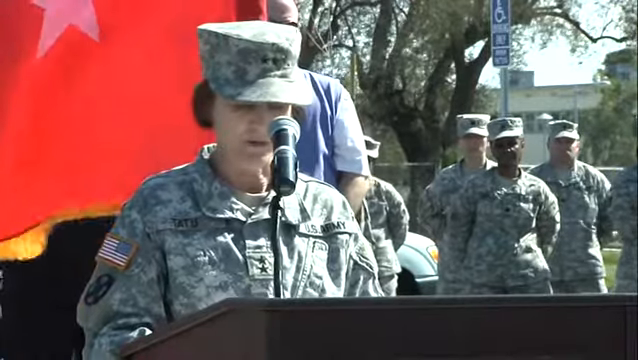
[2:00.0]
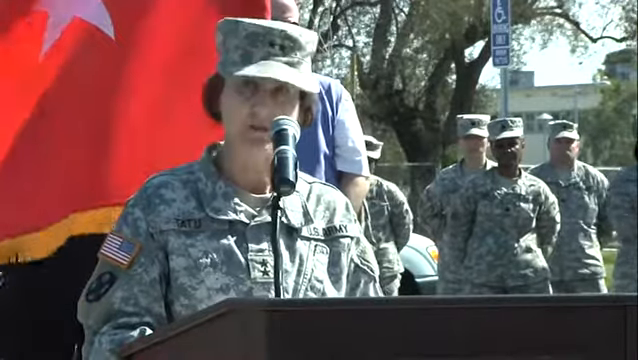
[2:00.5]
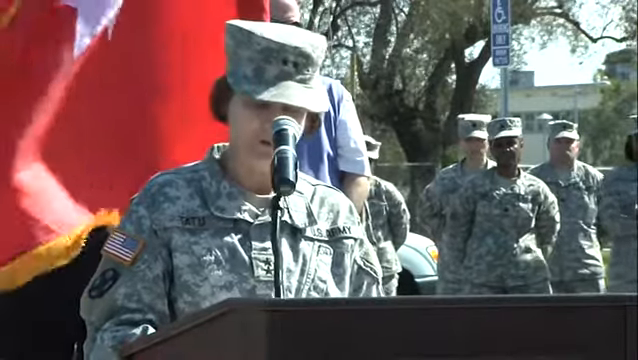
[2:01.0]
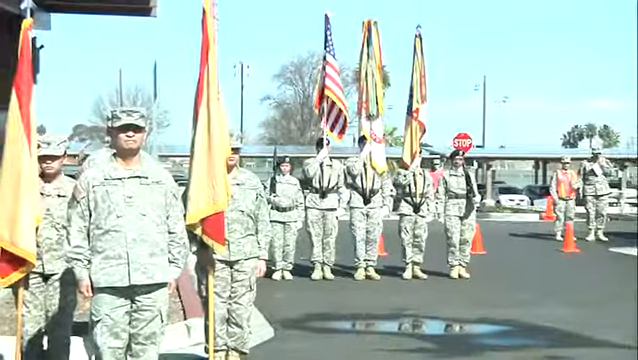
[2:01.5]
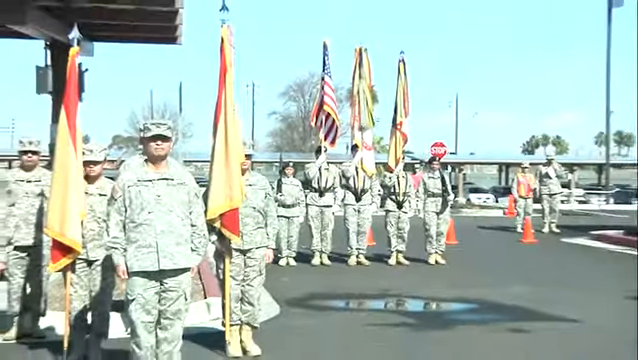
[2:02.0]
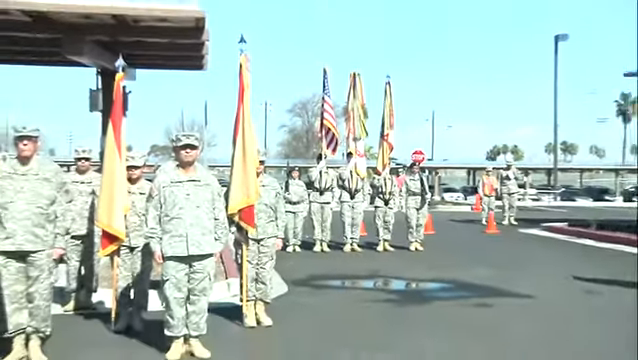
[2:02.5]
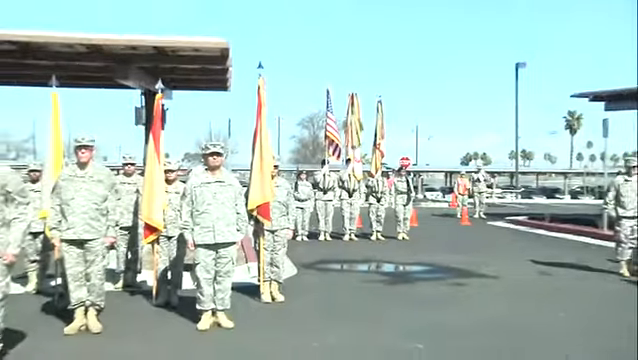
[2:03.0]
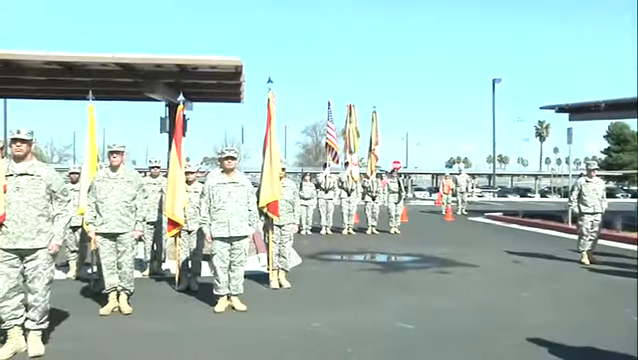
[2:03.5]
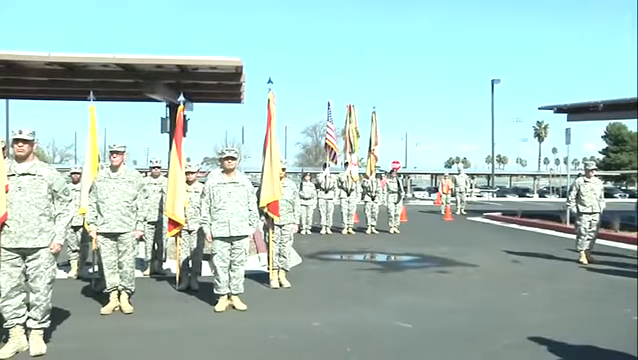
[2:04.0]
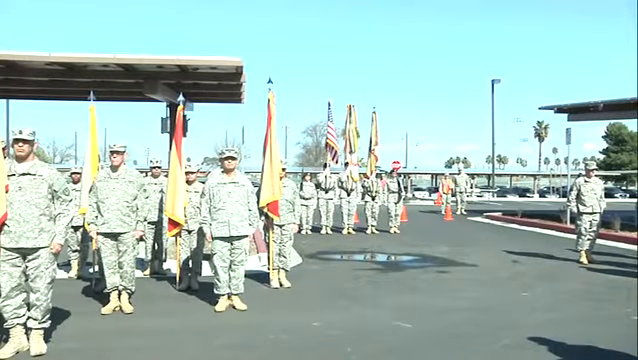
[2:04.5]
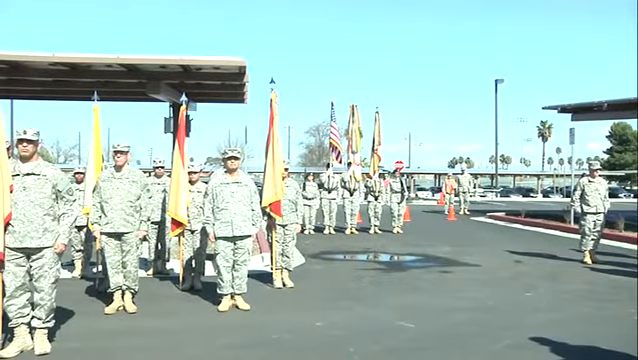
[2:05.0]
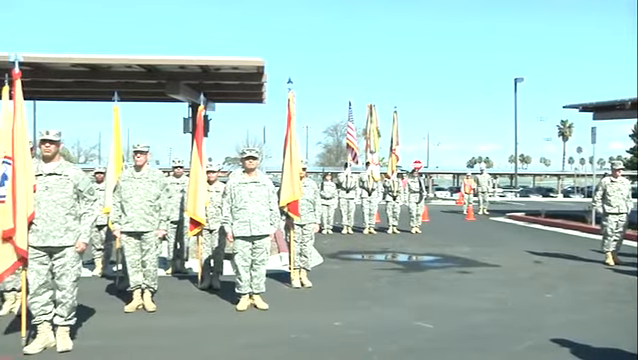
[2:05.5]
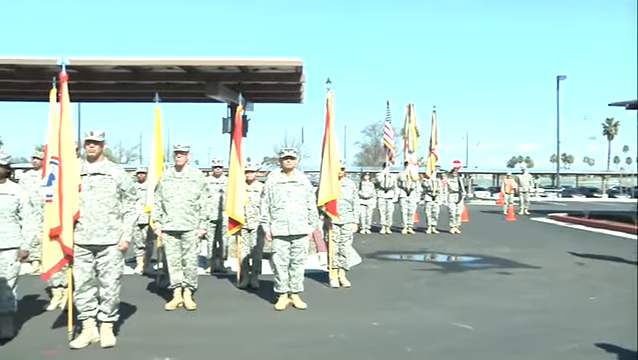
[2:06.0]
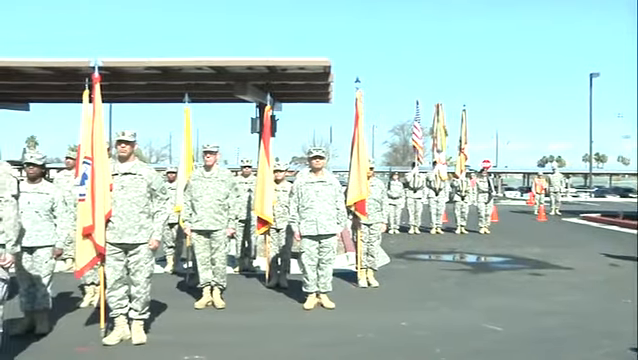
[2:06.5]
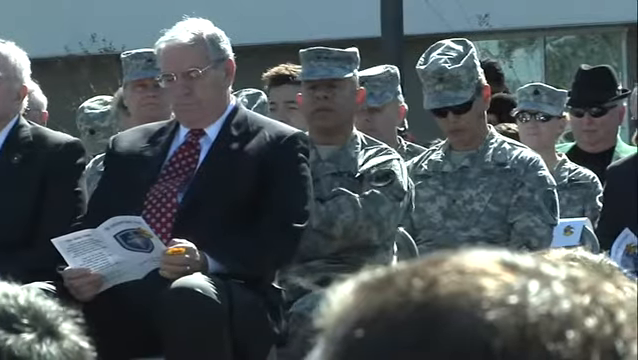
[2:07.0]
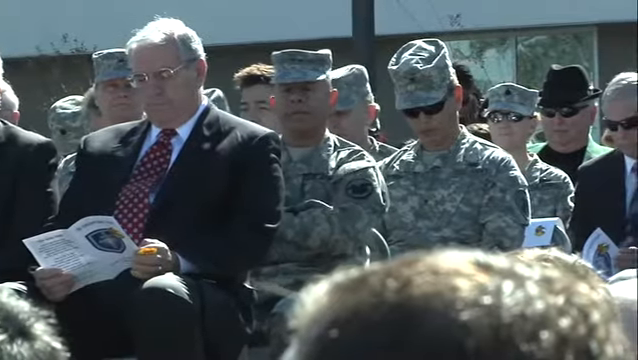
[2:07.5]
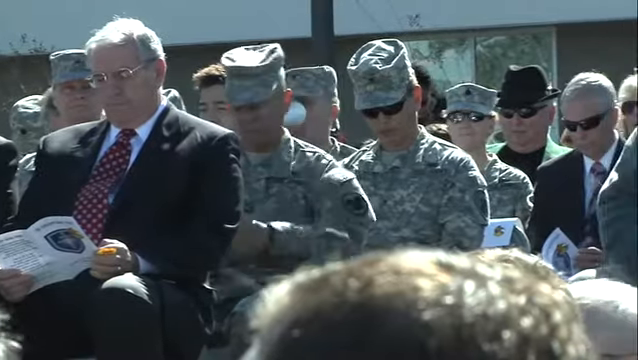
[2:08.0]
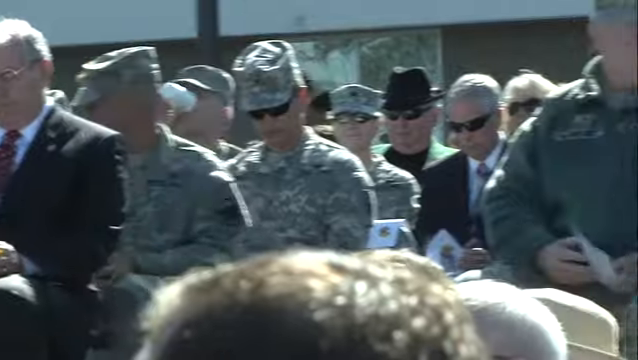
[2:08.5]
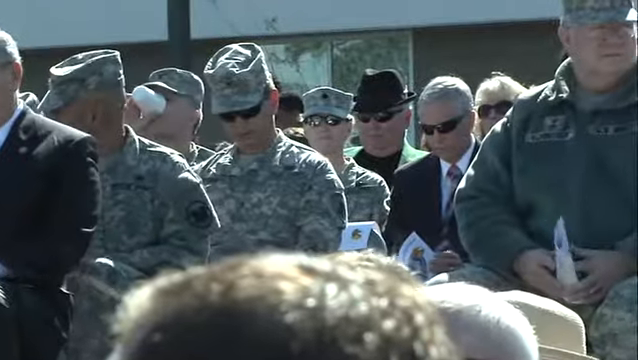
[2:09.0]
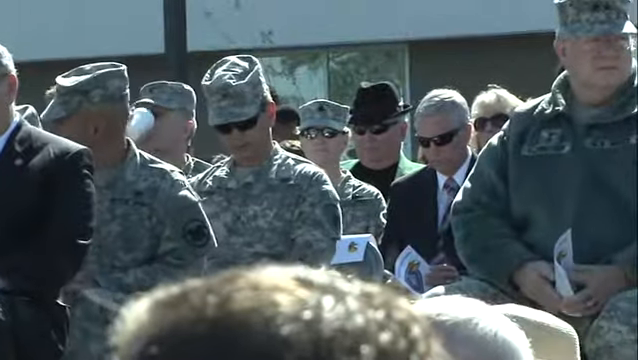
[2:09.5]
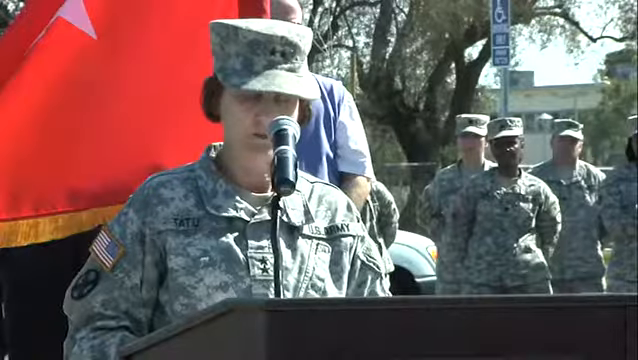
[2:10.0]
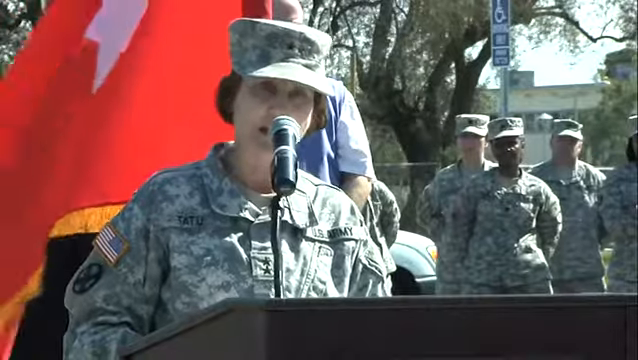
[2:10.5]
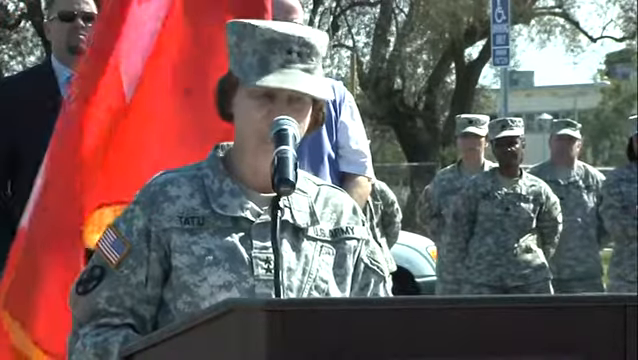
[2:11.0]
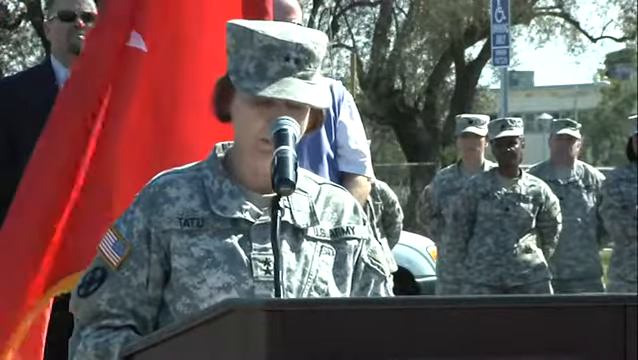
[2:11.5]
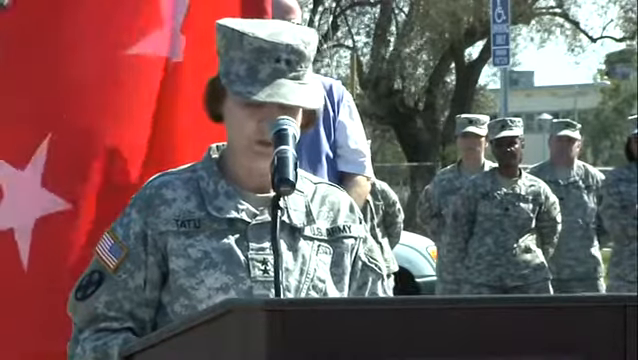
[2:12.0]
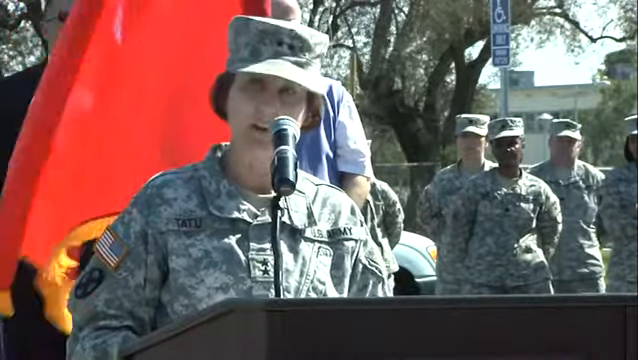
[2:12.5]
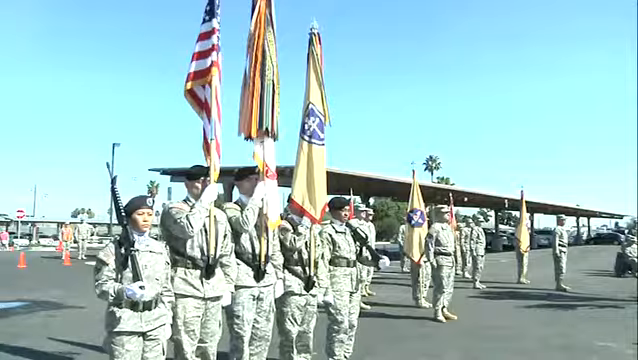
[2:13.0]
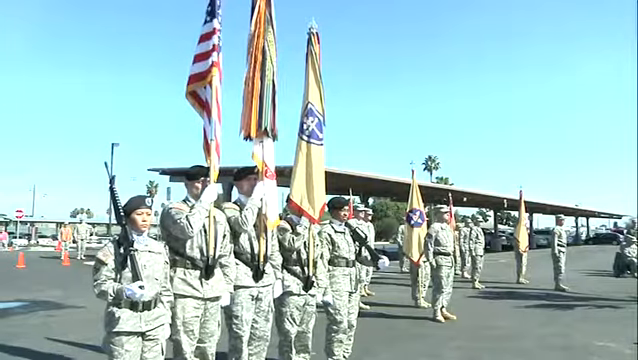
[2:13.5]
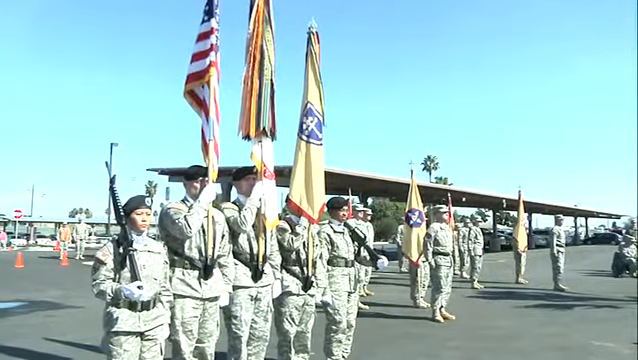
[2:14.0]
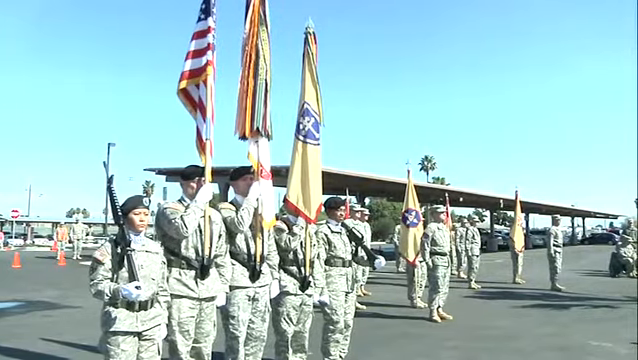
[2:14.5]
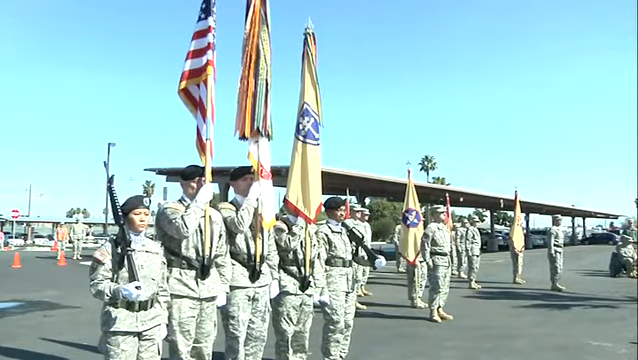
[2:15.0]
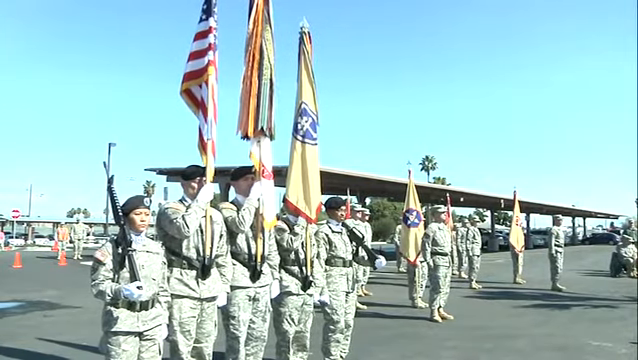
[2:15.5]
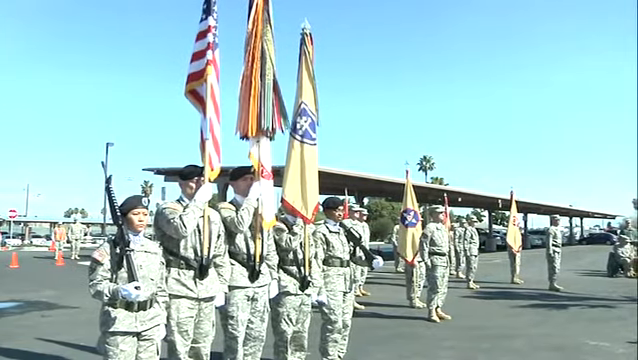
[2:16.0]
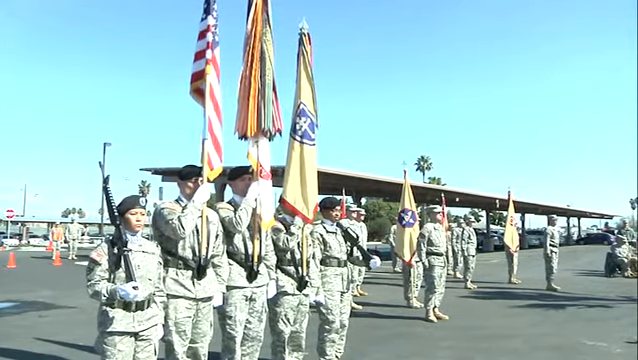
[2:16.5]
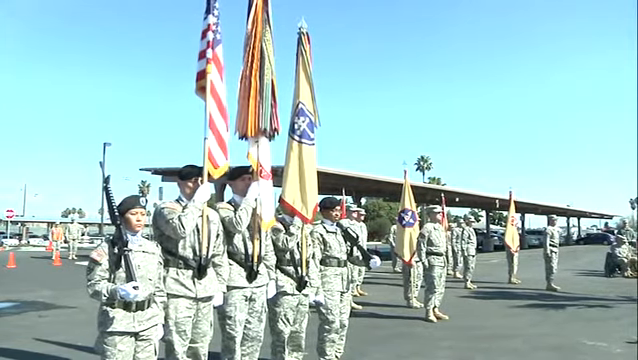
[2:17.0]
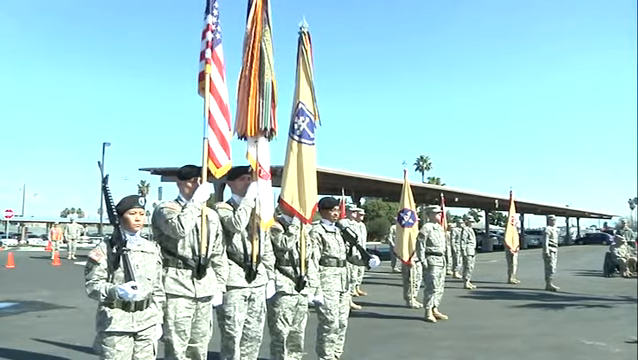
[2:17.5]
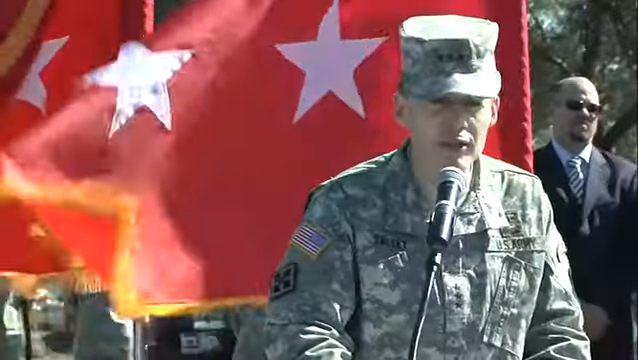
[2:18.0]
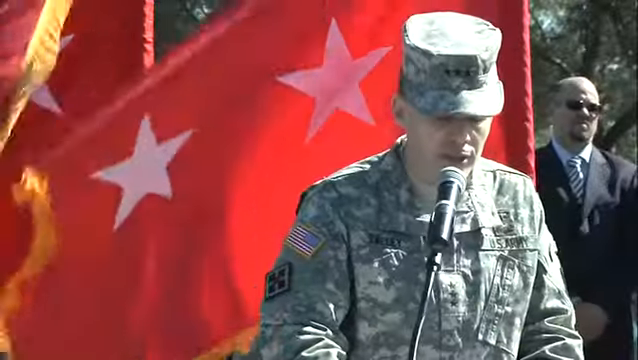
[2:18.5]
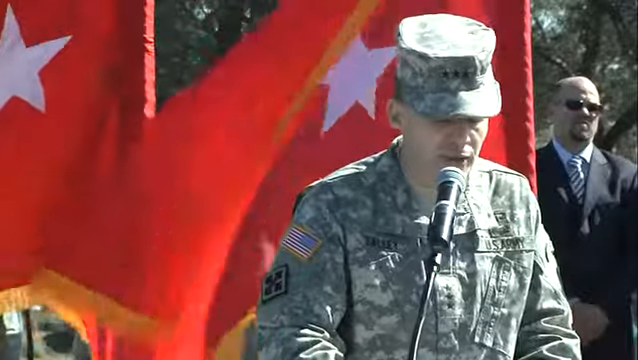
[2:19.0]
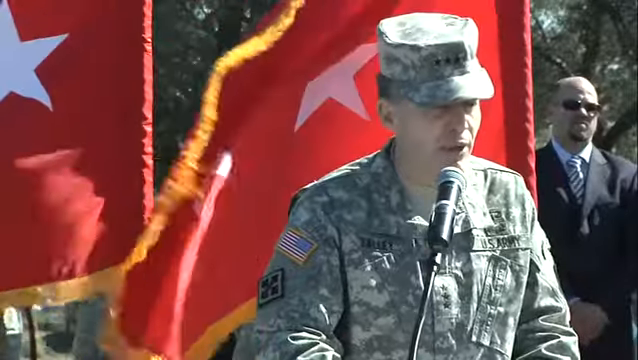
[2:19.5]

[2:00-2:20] Outdoors, a woman stands on a podium with a black microphone on it, visible from the chest up. She wears a thick, long-sleeved military shirt and a camouflage military cap with two stars on the front. Behind her a flag blows in the wind; it is solid red with one white star in the middle and orange strings and fringe hanging off its edges. Over her left shoulder, four other people in military uniforms stand listening to her speak. The video cuts to about 20 people in military uniforms standing and facing the camera, with those in front holding yellow flags to their sides. The camera slowly pans to the left, showing more soldiers, and then the video cuts back to the woman speaking into the microphone on stage.